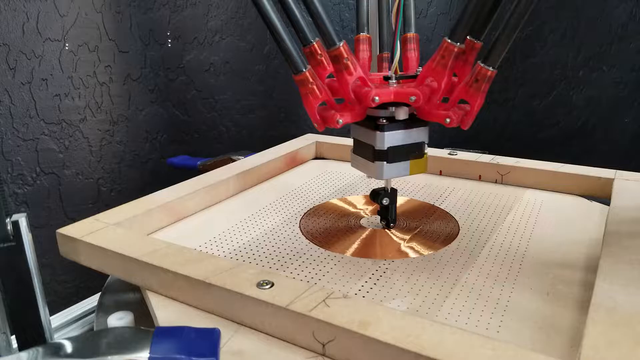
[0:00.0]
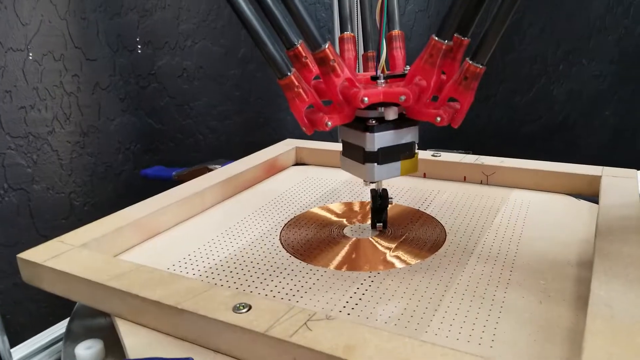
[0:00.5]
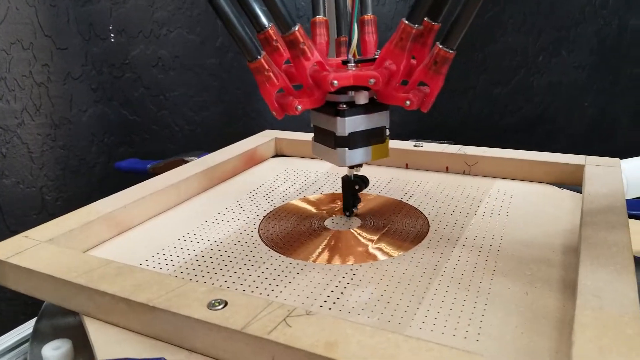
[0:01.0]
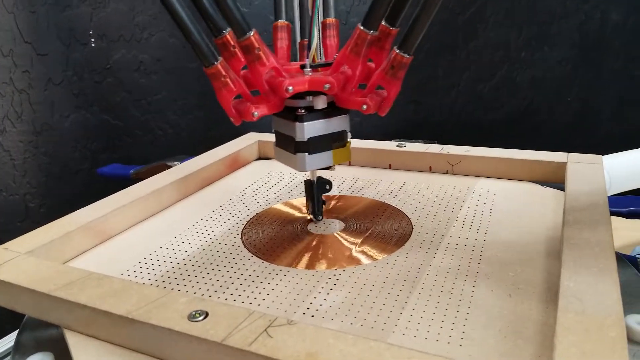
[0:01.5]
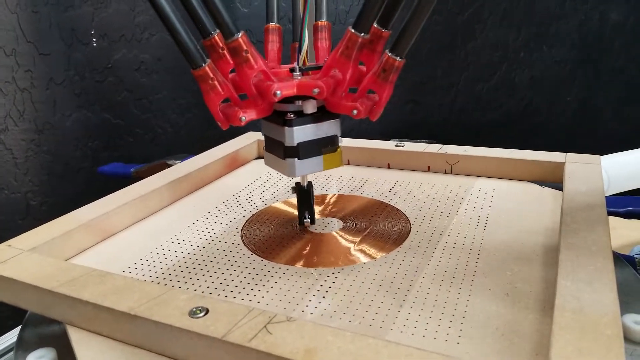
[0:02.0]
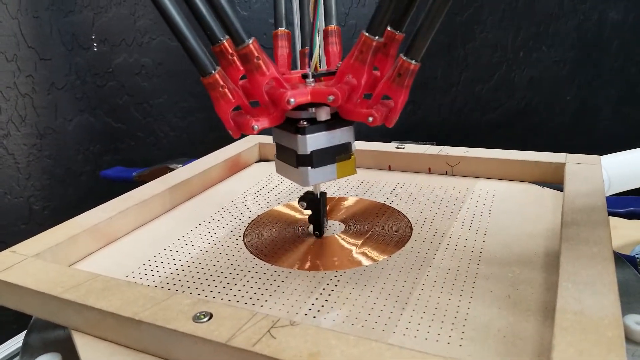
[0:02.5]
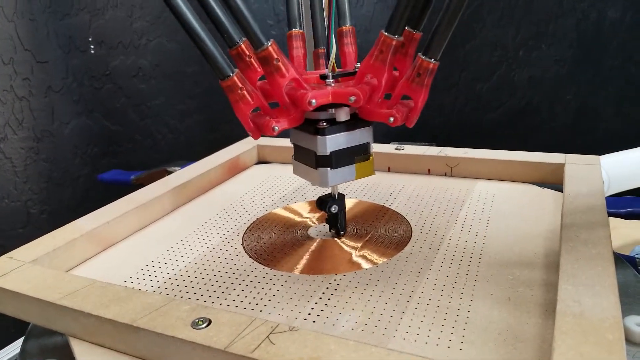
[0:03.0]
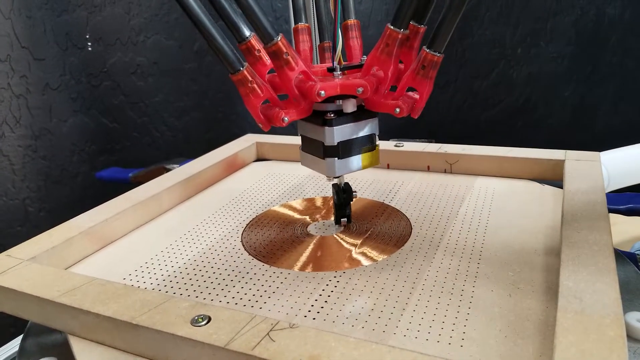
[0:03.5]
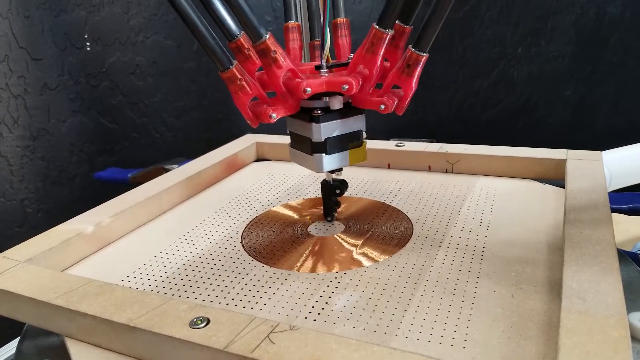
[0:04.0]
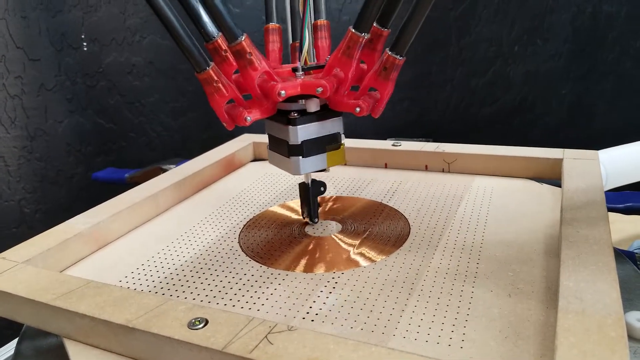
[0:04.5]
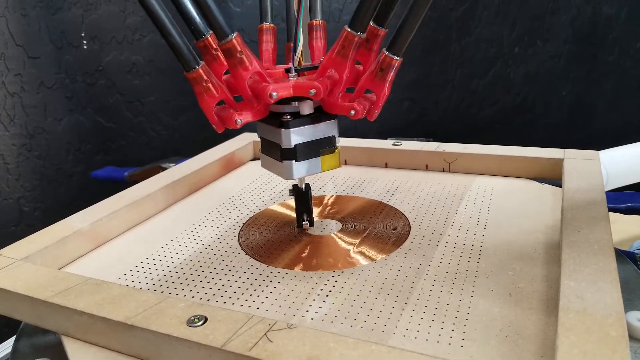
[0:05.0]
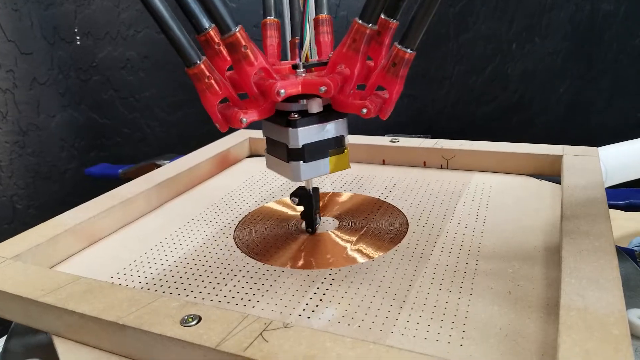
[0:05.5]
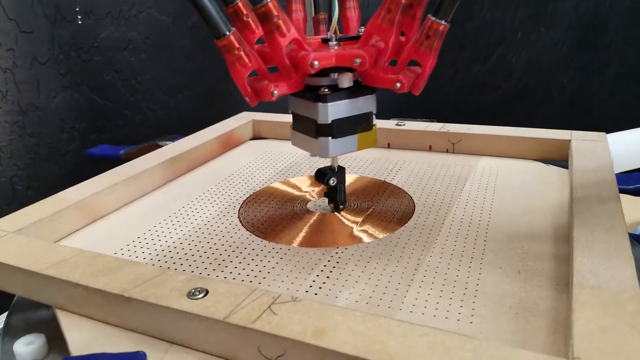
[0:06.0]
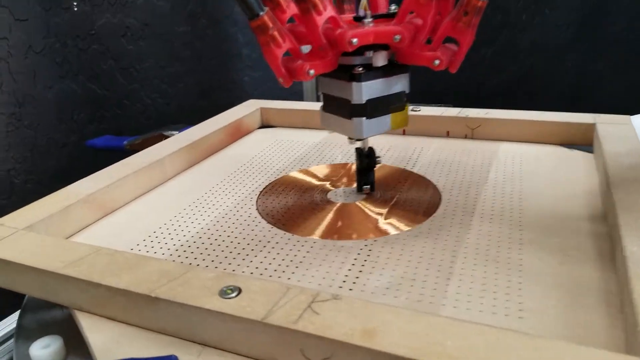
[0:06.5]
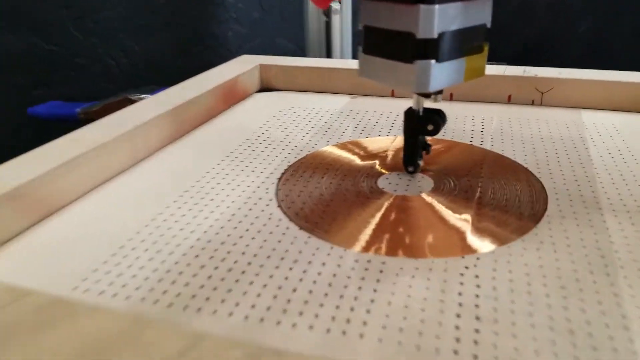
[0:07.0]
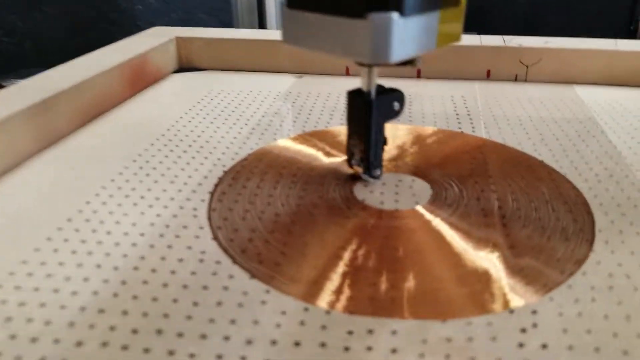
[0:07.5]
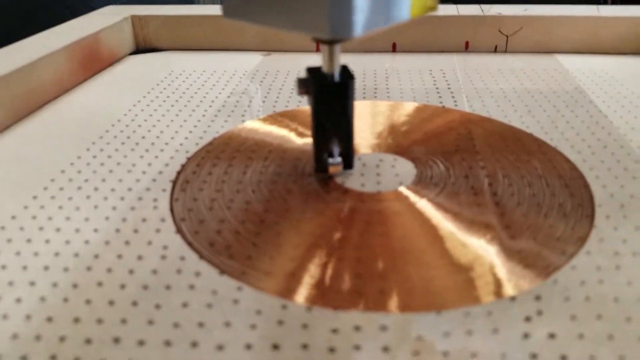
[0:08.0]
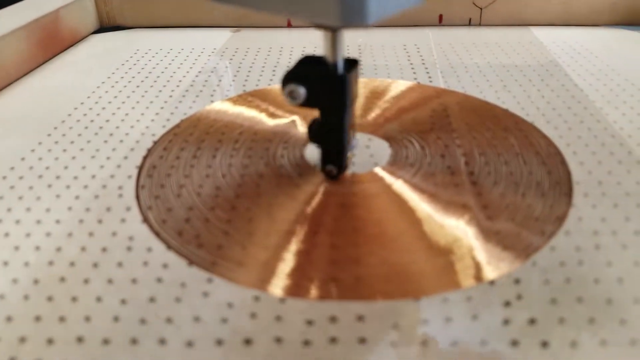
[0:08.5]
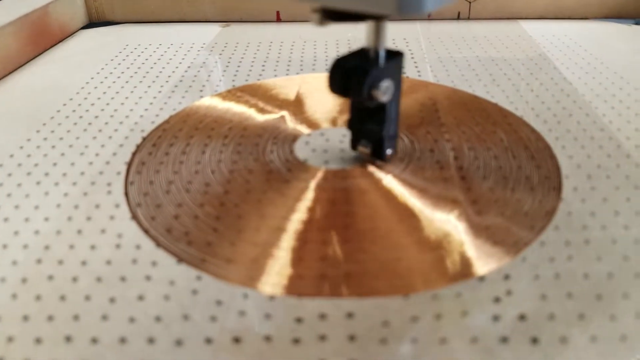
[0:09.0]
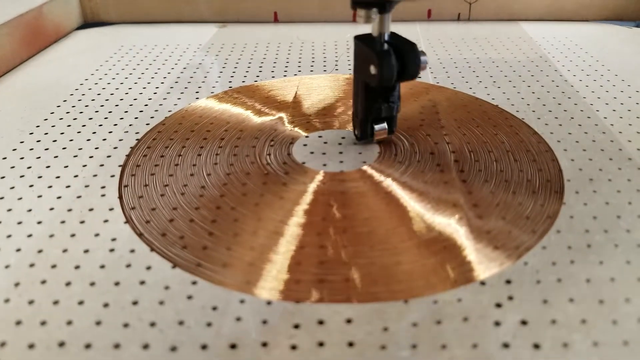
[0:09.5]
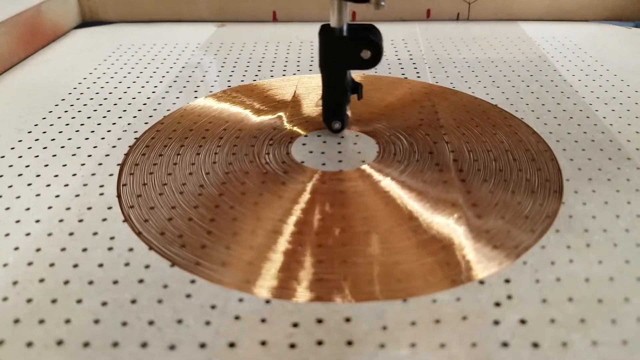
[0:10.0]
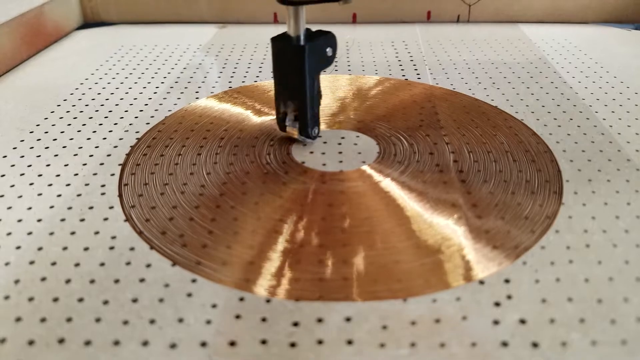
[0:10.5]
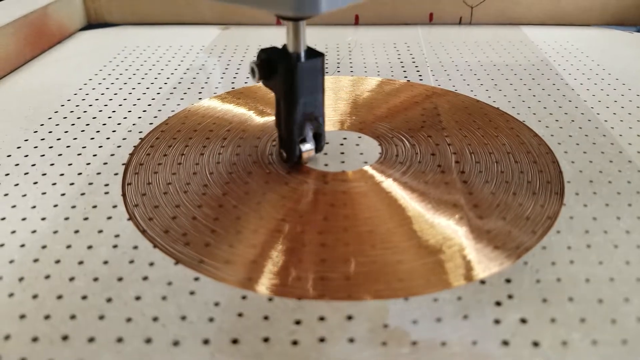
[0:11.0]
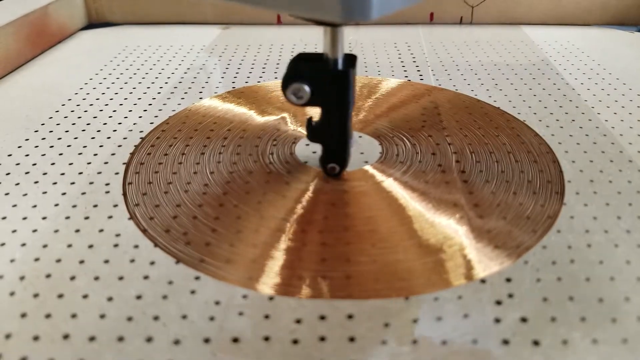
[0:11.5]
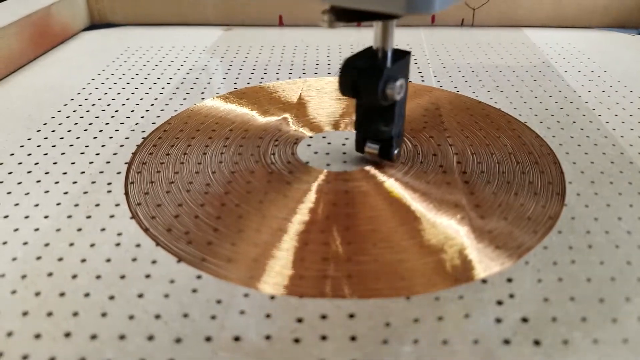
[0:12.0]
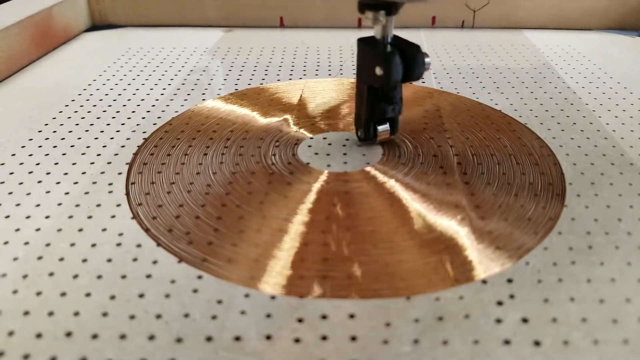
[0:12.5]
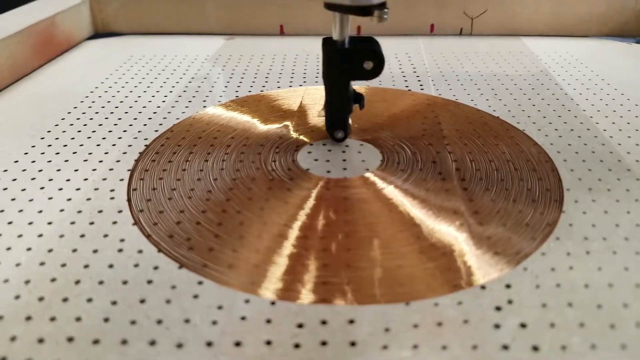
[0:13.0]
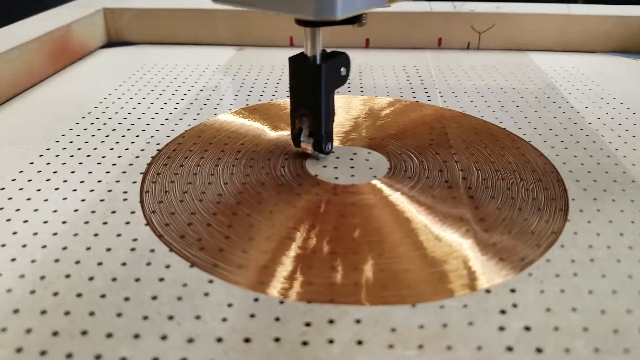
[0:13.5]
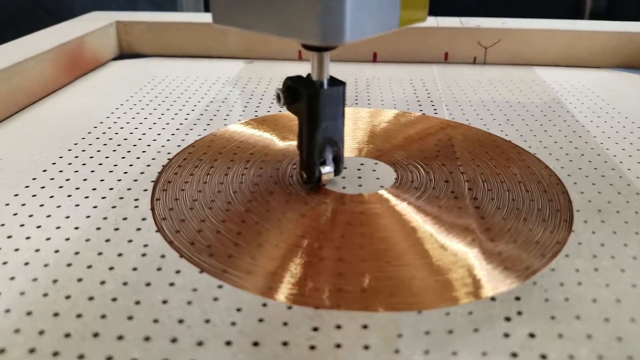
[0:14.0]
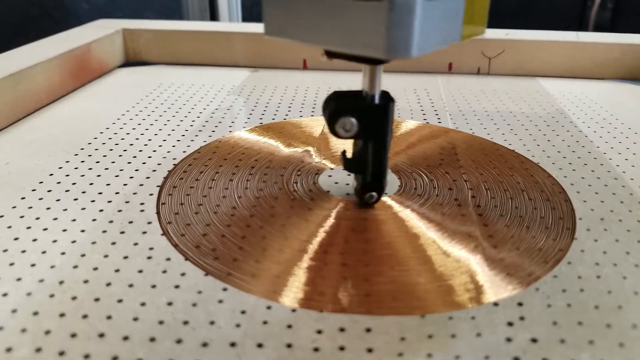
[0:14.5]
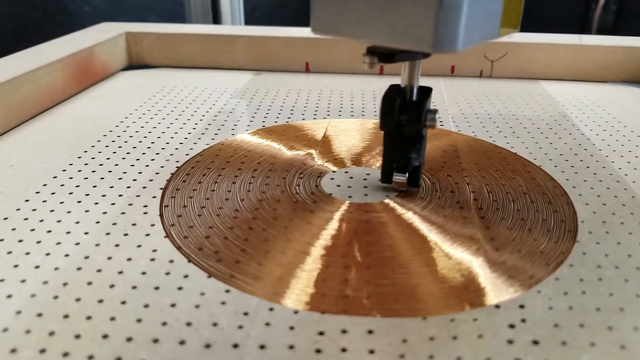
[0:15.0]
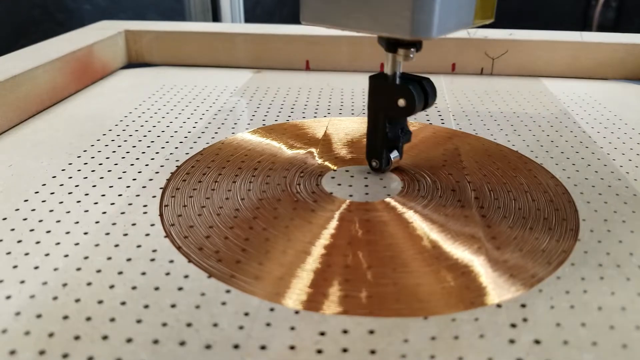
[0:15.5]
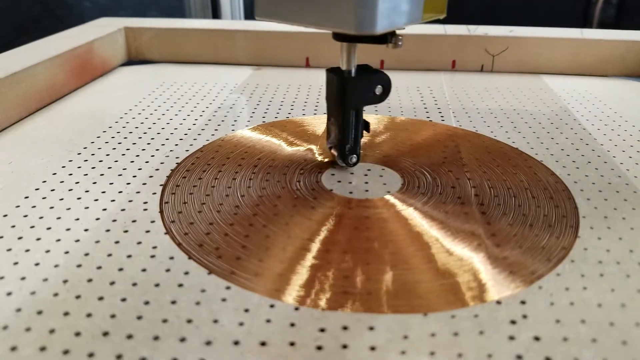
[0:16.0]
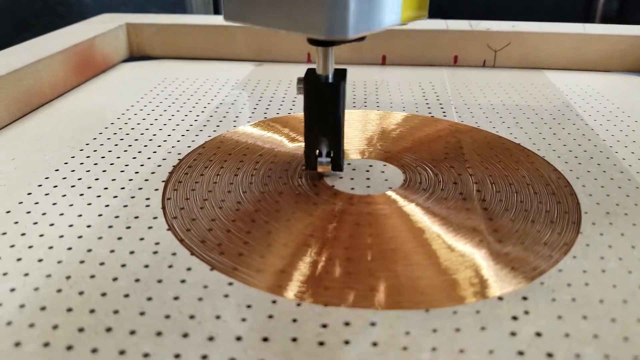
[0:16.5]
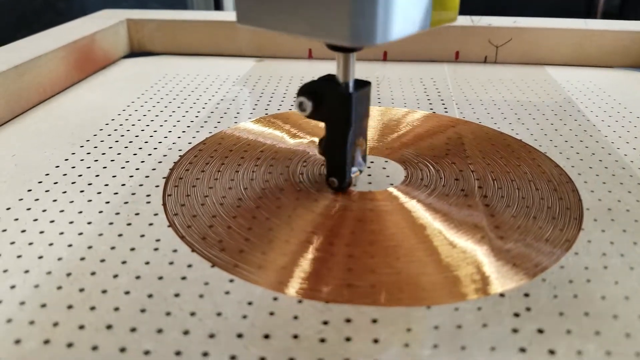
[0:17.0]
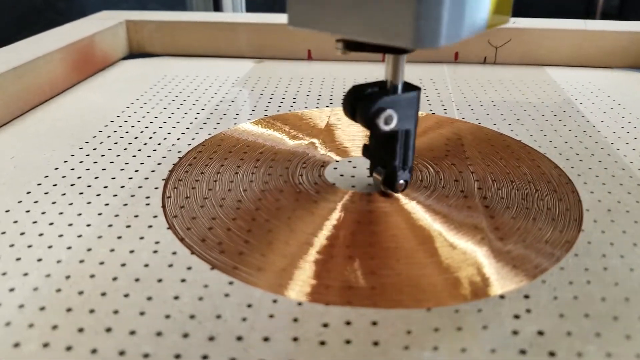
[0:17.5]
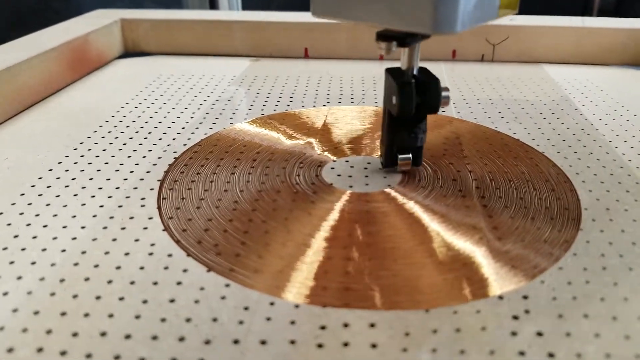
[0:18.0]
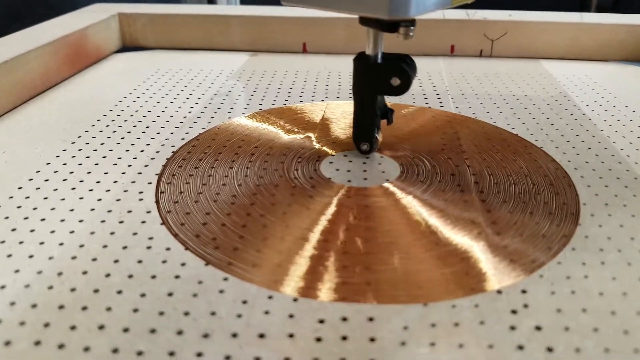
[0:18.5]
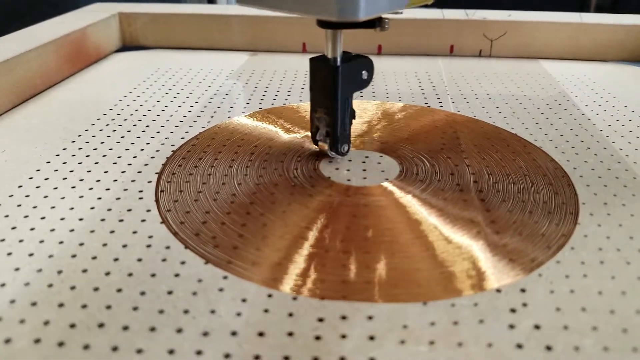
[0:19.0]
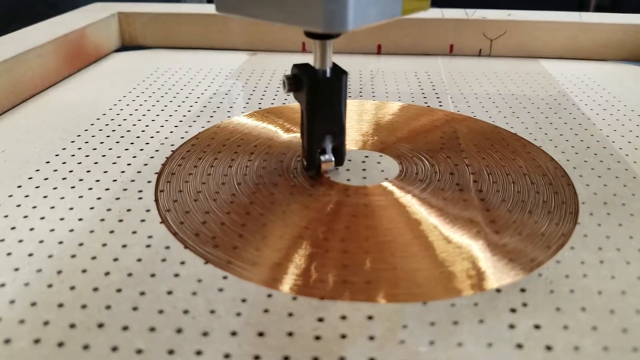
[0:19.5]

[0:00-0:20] A robot makes a circular motion on some sort of disc or vinyl. There is just one machine doing the work on a wooden-looking table with holes; it is red and has a sharp point that looks to be either cutting or shaping some sort of material. The setting is a corner of a room with black walls. The machine makes the same motion without much change. The gold material it is on top of is quite shiny, and the reflection of the machine's tip is visible on the gold area on the table. The camera zooms in briefly on the table, but most of the footage is from a roughly eye-level view. The machine moves very slowly, taking its time with its motions on the table.